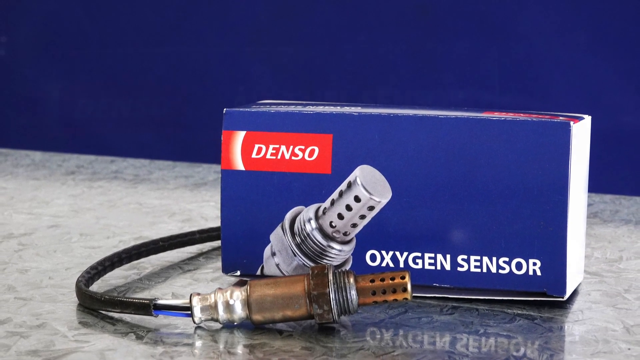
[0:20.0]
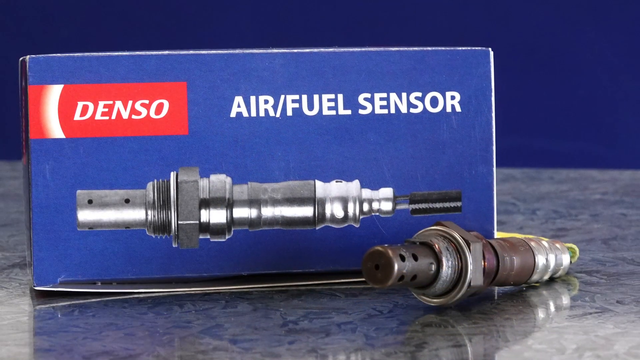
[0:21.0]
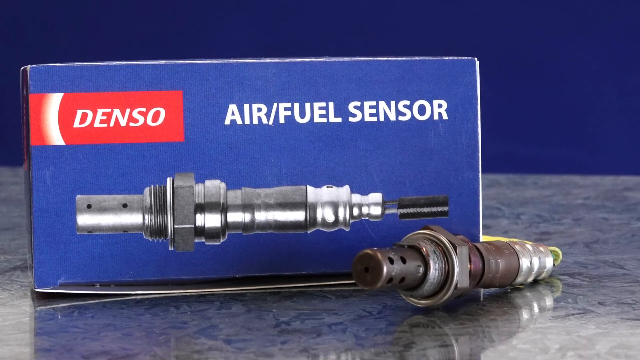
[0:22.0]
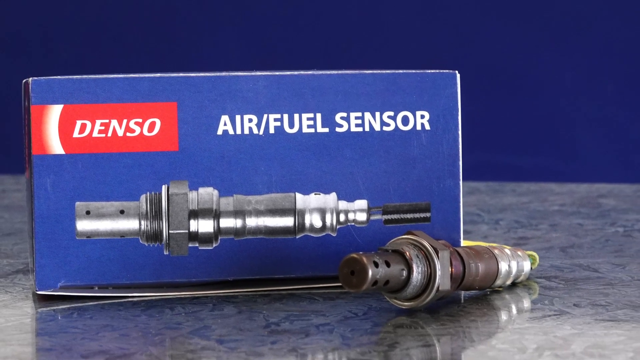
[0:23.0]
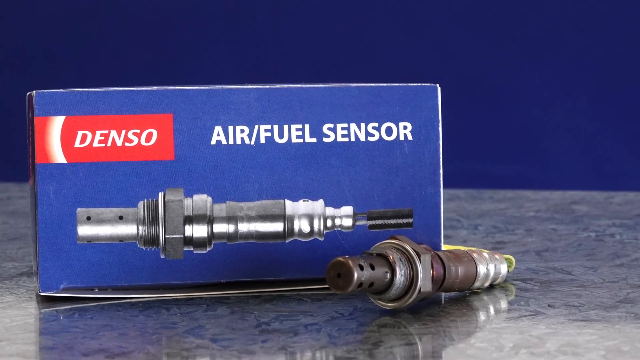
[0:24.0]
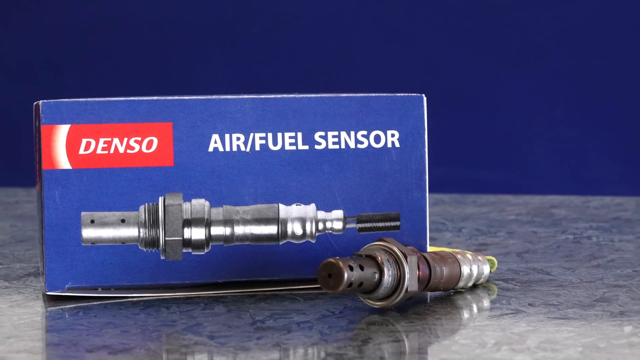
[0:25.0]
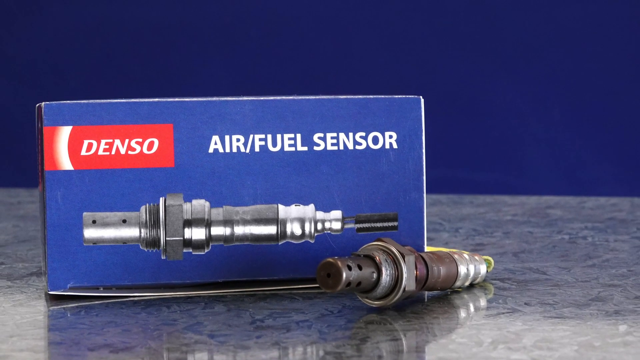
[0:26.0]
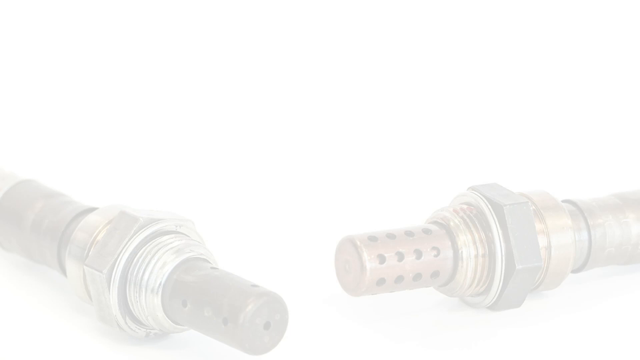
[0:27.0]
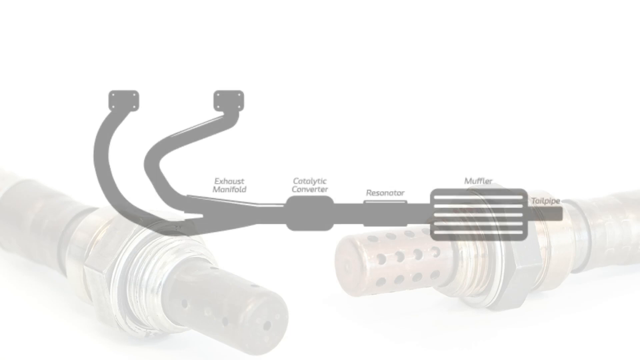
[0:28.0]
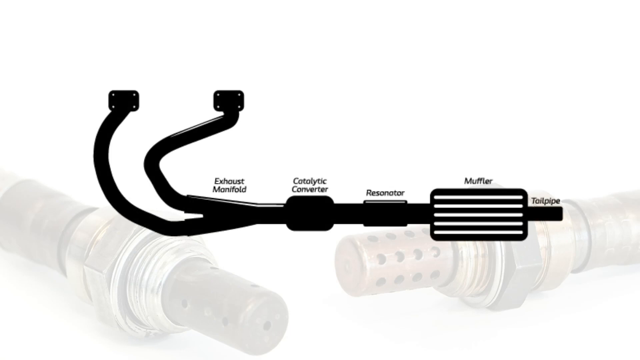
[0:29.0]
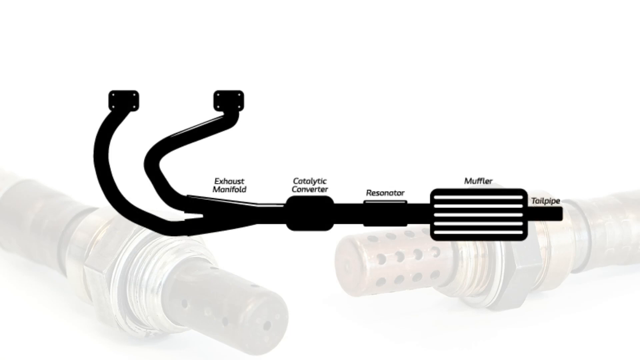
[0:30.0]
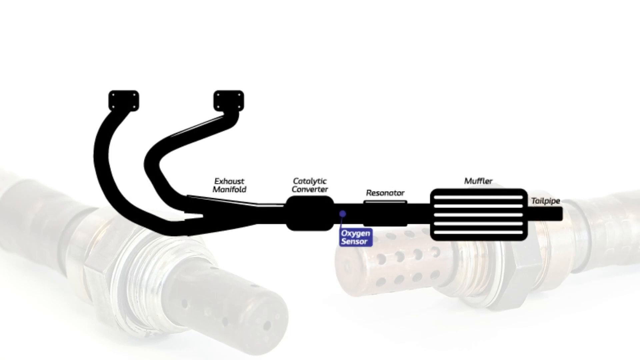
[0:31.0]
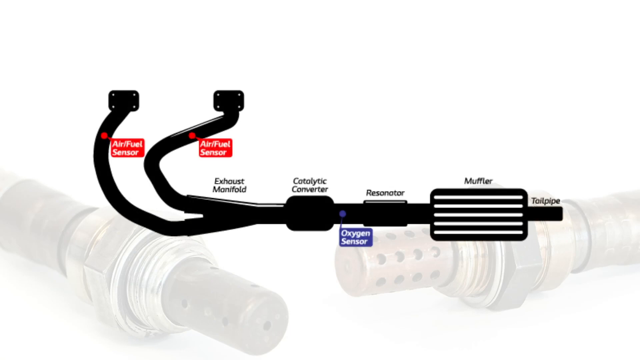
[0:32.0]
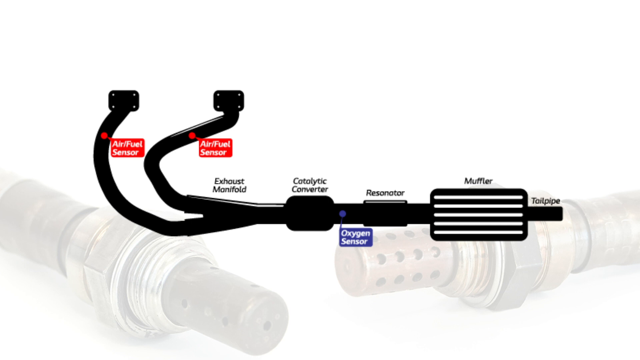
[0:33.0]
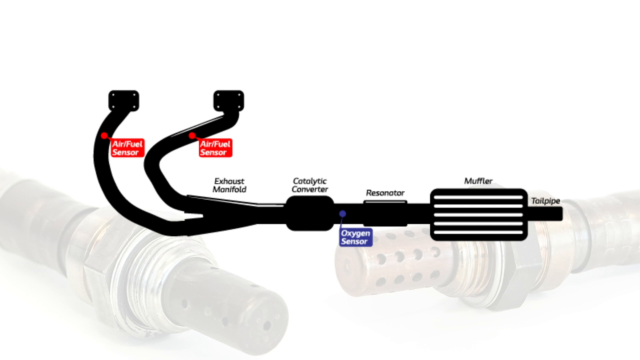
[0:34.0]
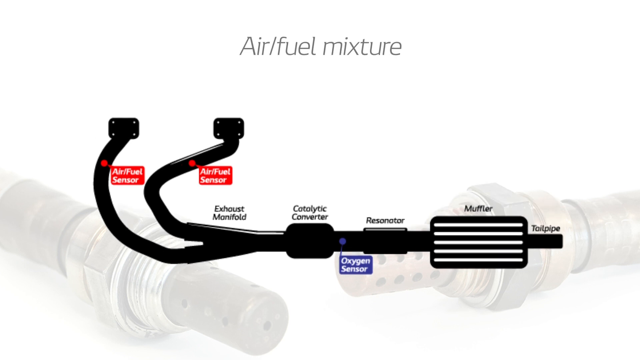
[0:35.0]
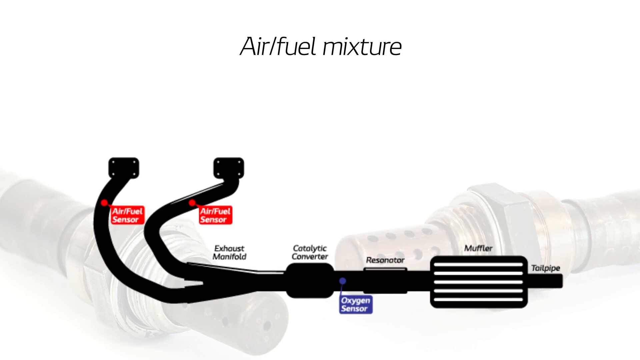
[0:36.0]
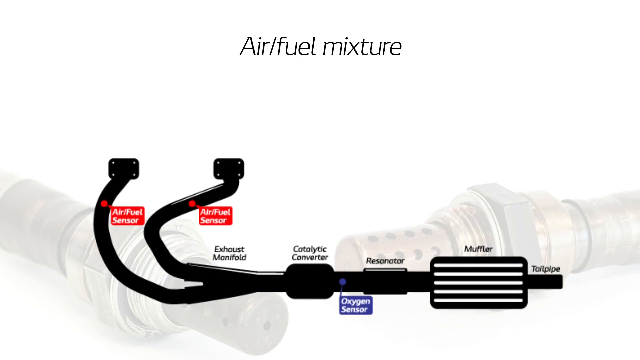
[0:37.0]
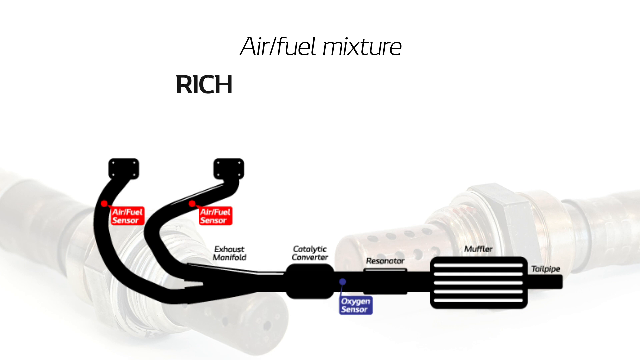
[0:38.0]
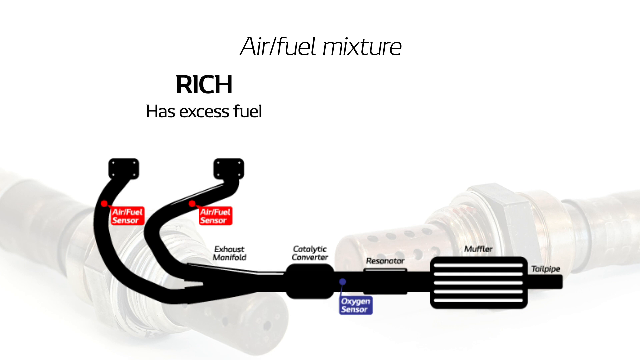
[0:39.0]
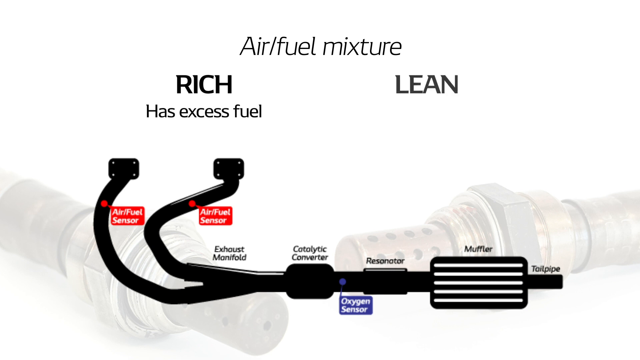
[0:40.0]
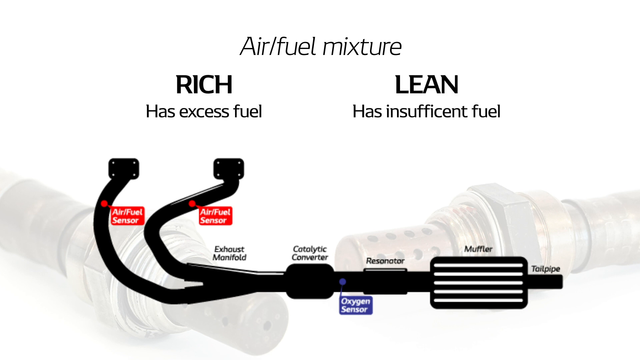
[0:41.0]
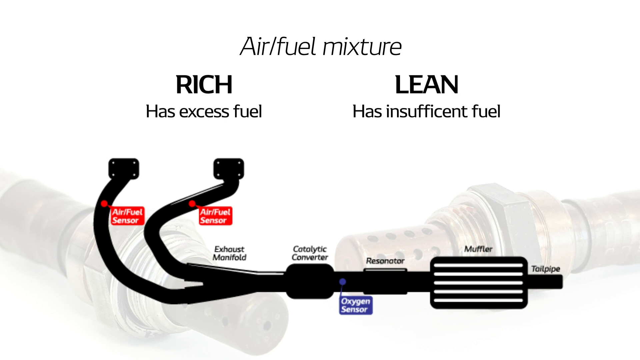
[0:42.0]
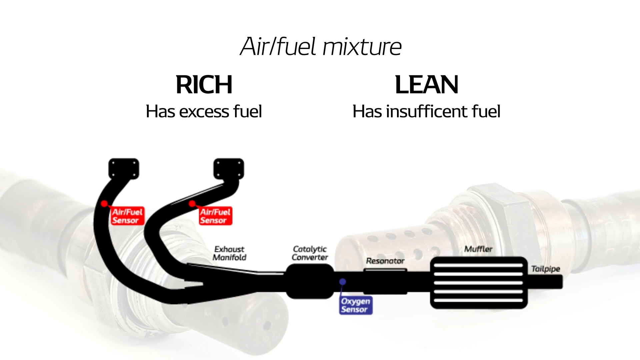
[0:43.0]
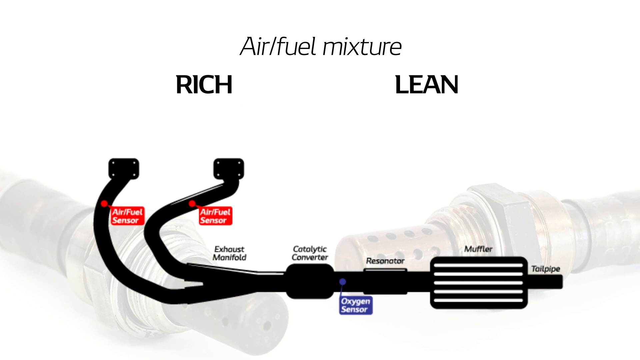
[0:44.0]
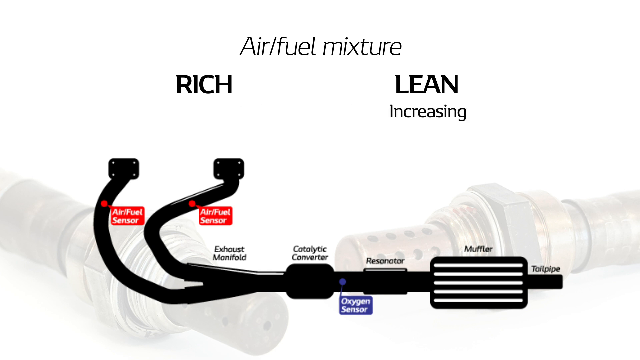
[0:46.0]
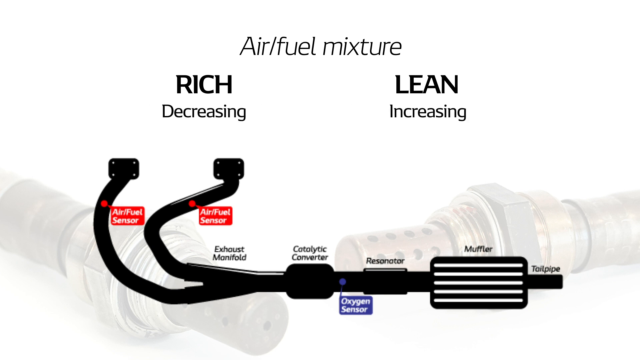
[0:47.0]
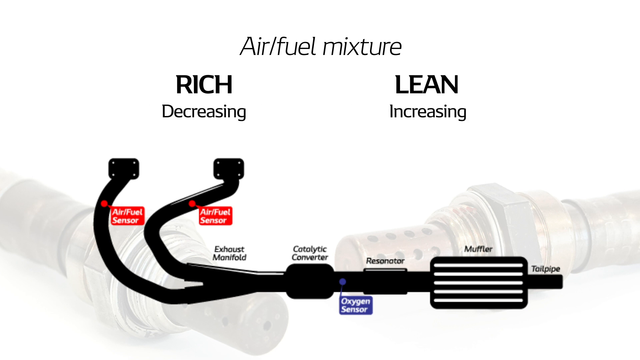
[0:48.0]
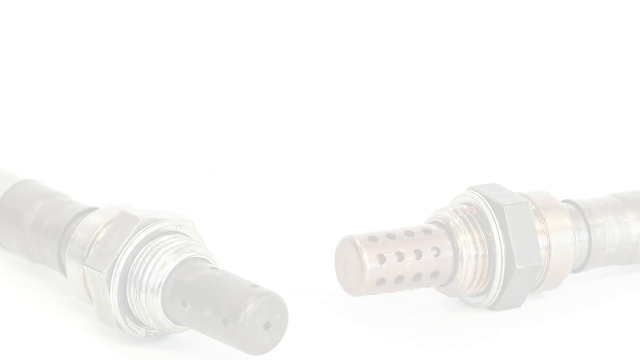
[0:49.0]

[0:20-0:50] "Oxygen sensors" appears in a blue rectangular box, with the company name Denso. The equipment has a lot of same-size circles in it, which apparently may be where oxygen comes out, possibly blown into another piece of equipment. A black cord comes out of it. Next the air/fuel sensor is shown: the image of it on the box, then the real one on the right side of the box. An animated image of sorts follows, with labels reading "exhaust manifold," "catalytic converter," "resonator," "muffler" and "tailpipe." Spots in the upper left part are labelled "air fuel sensor," two of them, and the middle part is labelled "oxygen sensor." The image also reads "air/fuel mixture," "rich has excess fuel" and "lean has insufficient fuel."